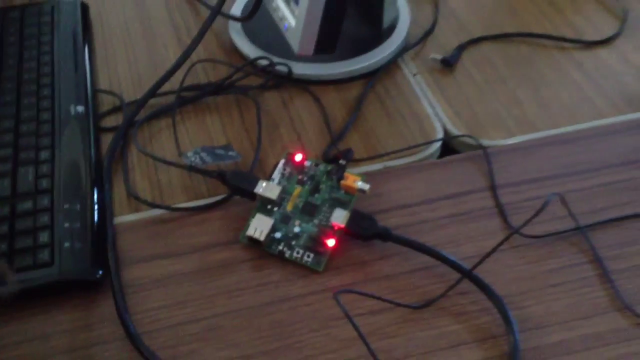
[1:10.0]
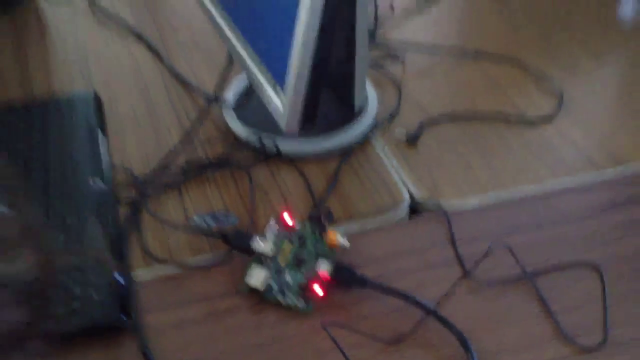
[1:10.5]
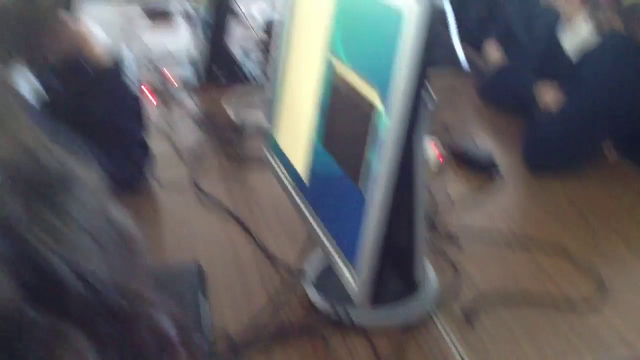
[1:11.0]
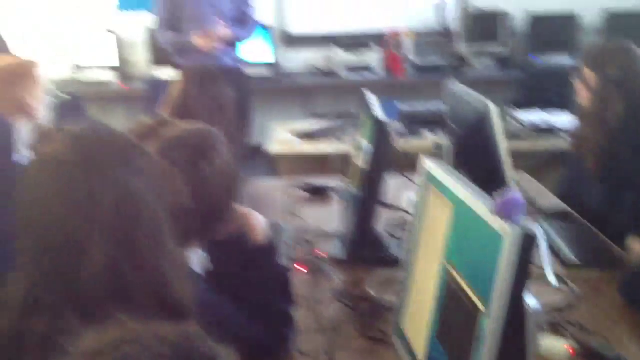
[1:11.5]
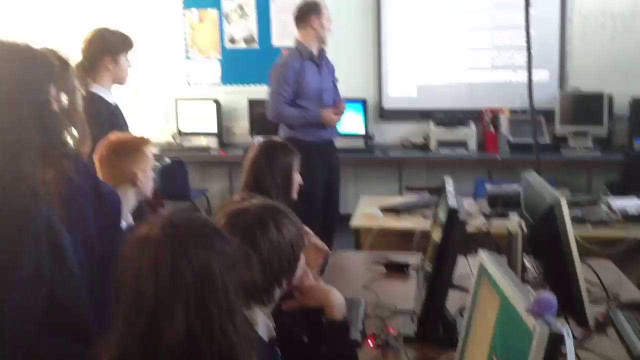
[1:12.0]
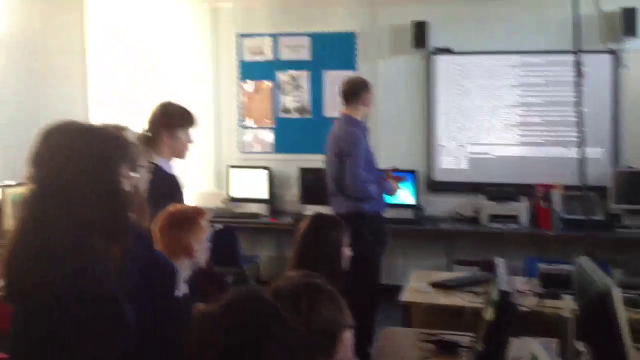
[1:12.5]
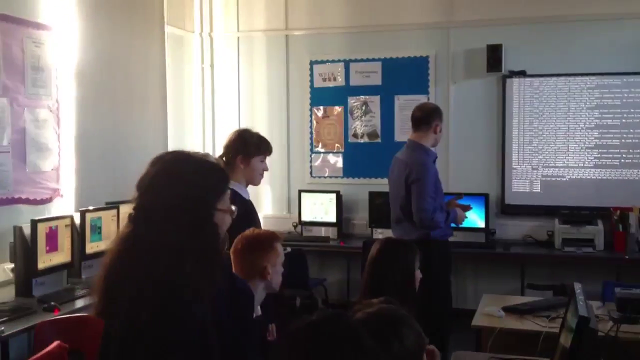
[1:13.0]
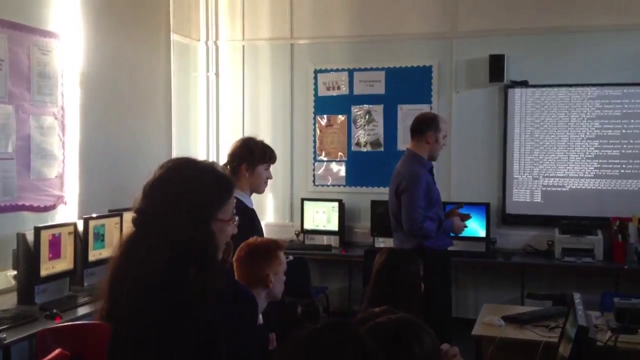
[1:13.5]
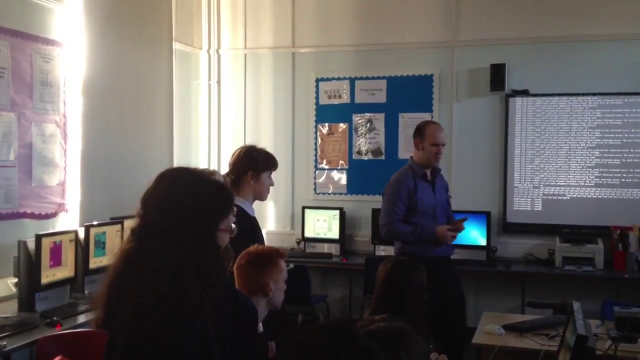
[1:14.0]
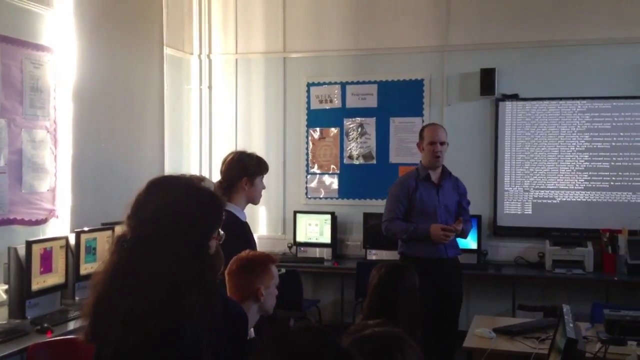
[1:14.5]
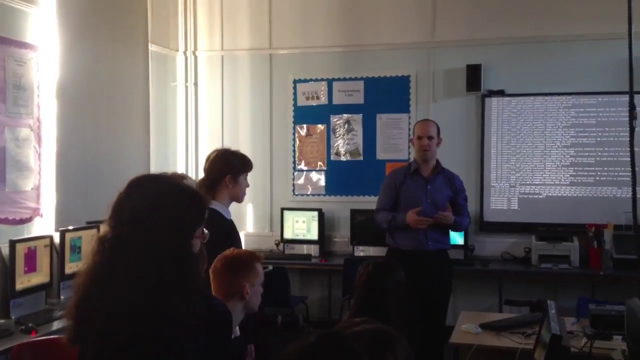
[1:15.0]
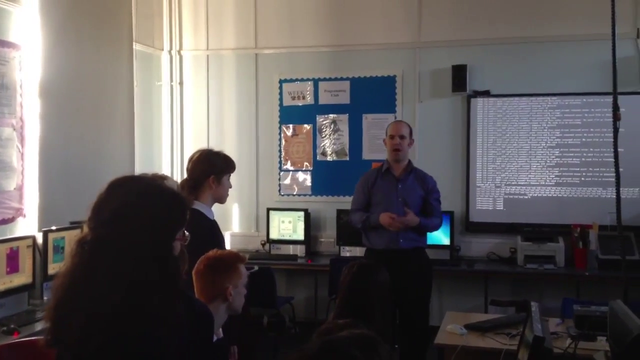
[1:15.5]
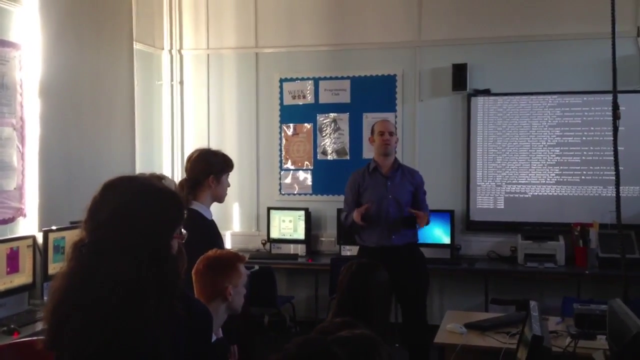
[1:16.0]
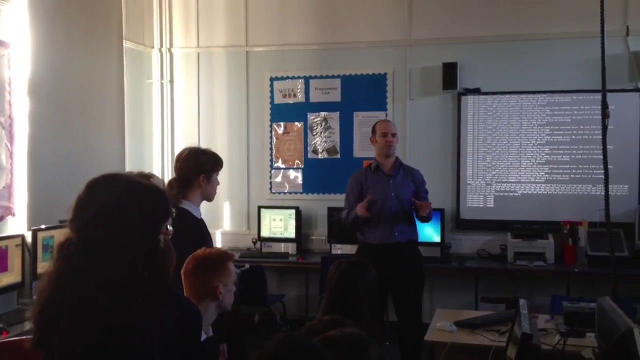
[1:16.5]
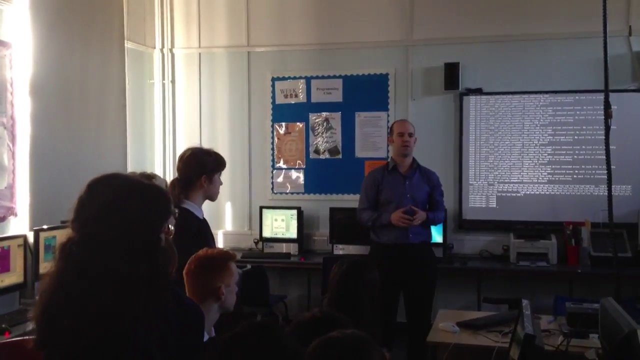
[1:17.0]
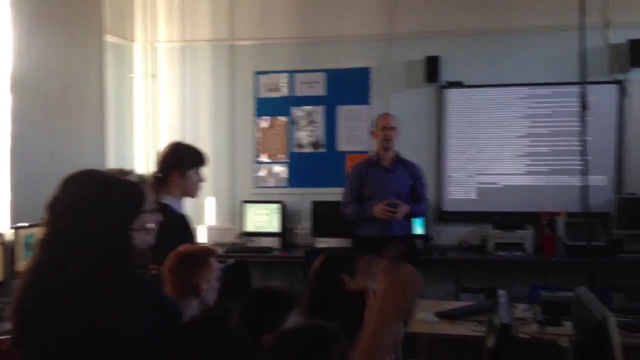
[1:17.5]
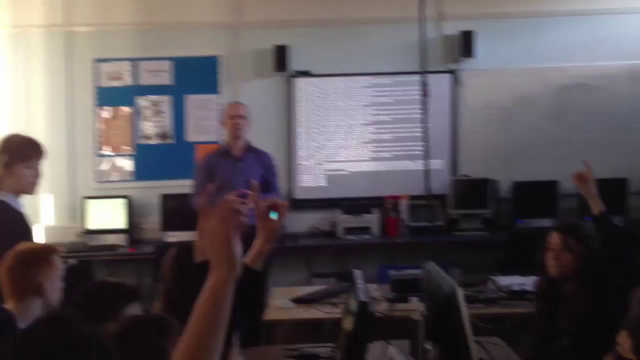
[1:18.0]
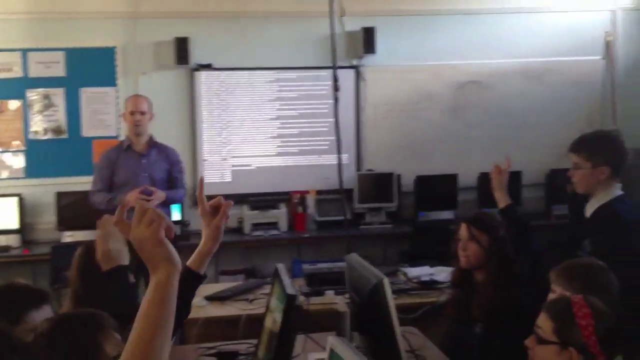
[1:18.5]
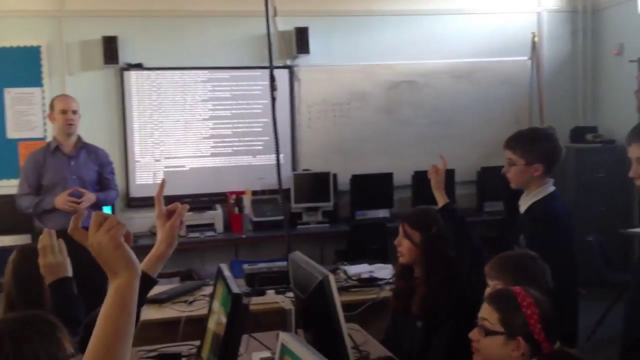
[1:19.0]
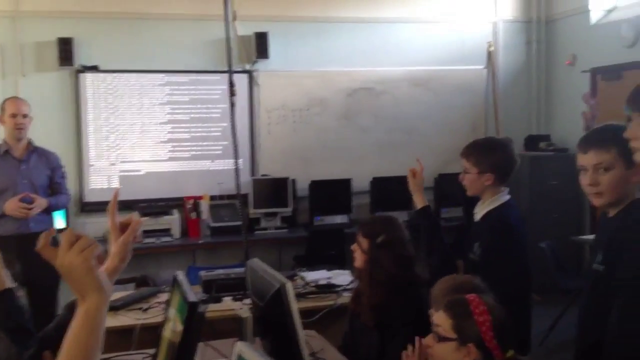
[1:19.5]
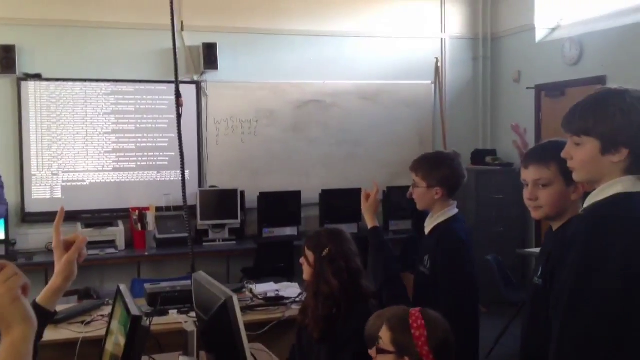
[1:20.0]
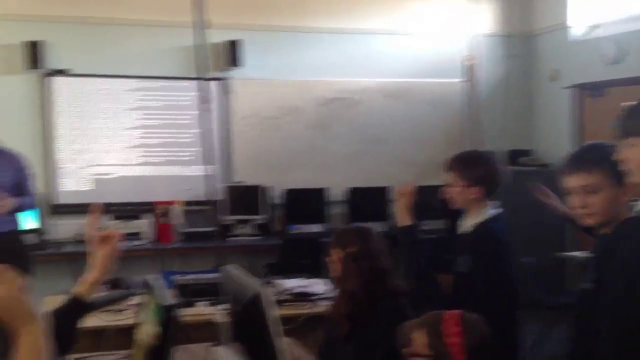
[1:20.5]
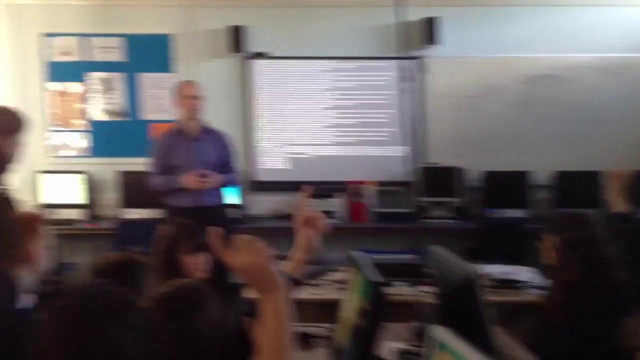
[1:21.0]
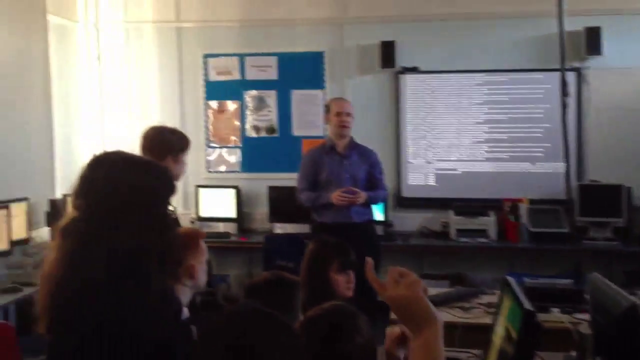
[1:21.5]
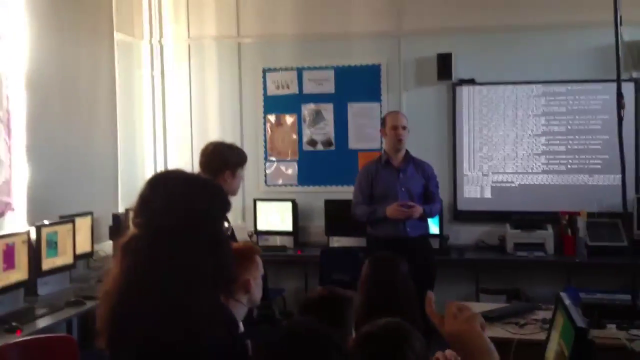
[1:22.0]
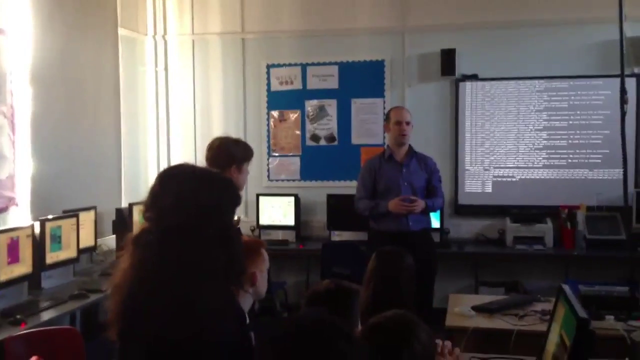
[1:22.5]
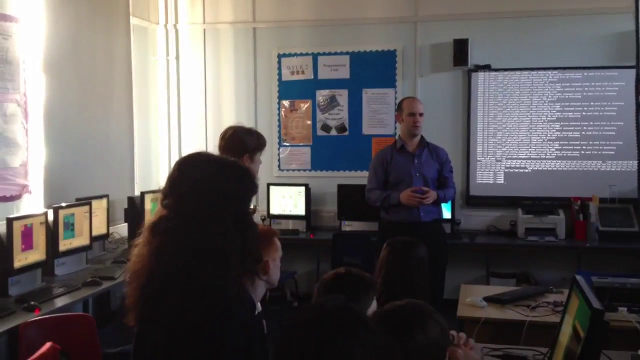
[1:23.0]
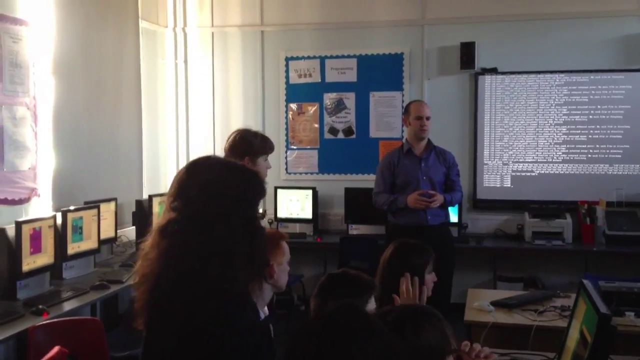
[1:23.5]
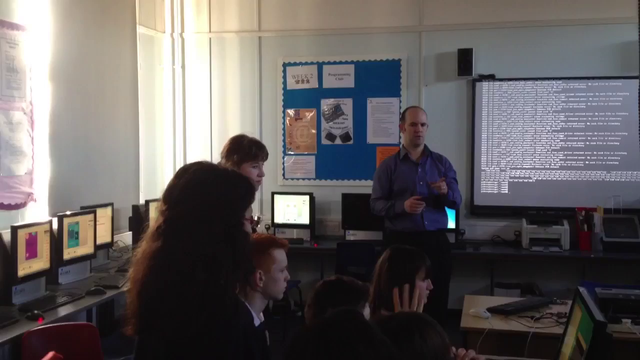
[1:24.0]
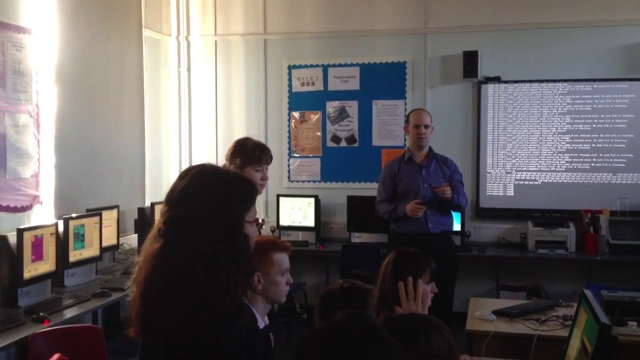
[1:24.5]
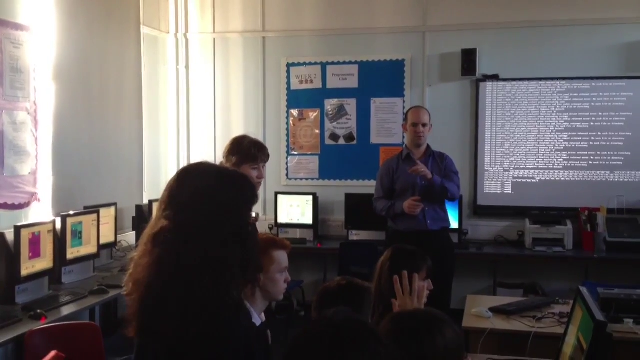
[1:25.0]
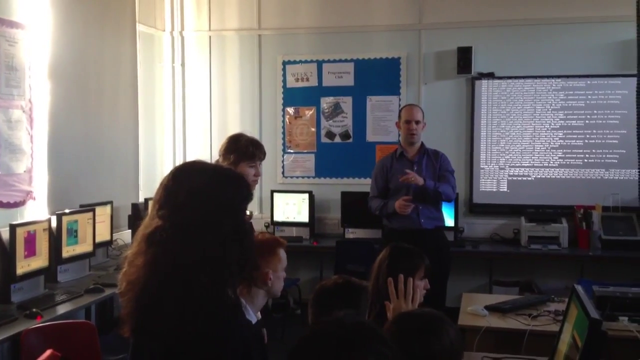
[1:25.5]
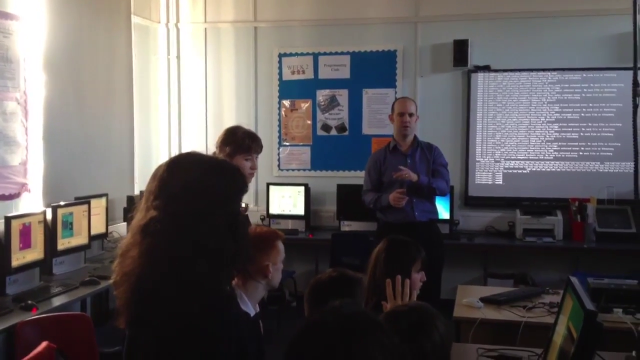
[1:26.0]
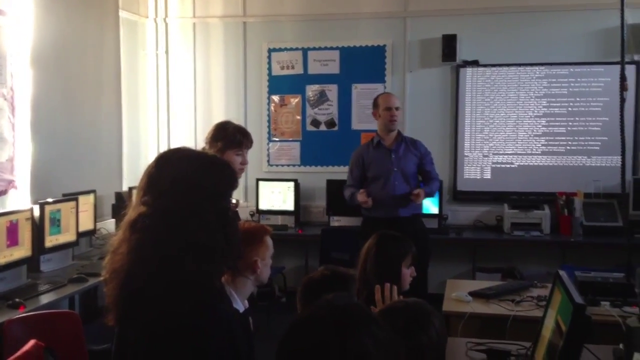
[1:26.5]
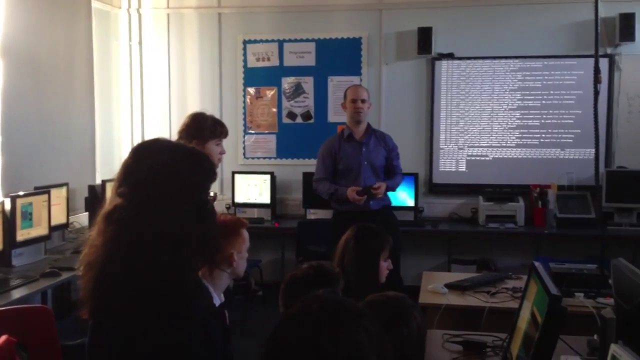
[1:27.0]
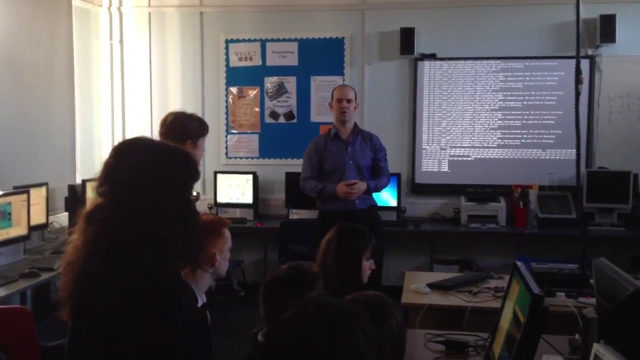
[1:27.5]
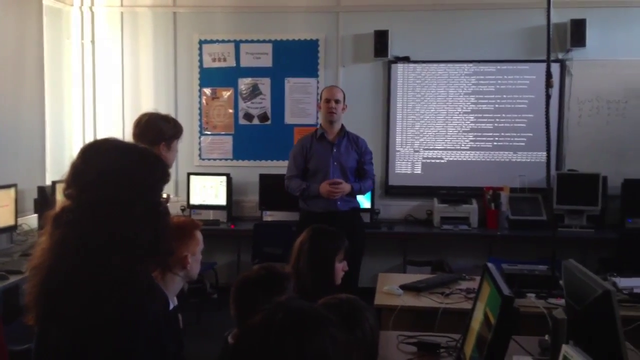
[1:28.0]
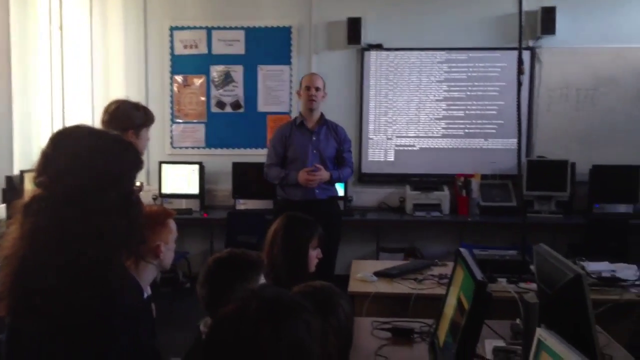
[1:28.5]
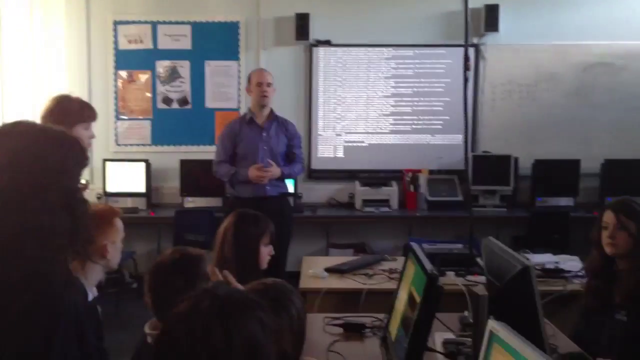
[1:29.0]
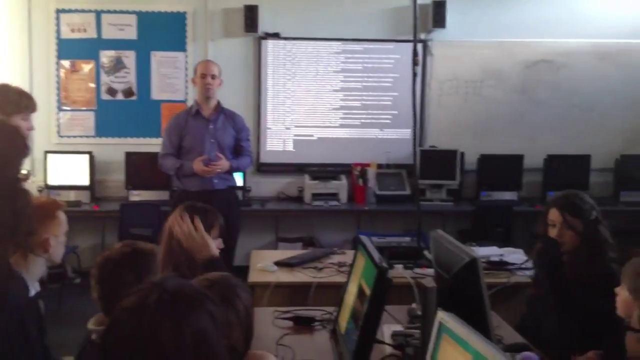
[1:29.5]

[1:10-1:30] The camera zooms out and back up to the teacher talking. On the left, two girls are standing up, observing, and more computer monitors are lined up against the wall. The teacher addresses the classroom with both hands bent at the elbows, palms open, then brings his fingertips together so they touch. Three students raise their hands, and the camera hovers to the right, where a few more students raise their hands, then hovers back to the teacher, whose fingertips are touching in front of him. He points his left hand at a student, then points to another student to the left, and brings his fingertips together again. A student in the lower left corner of the screen raises his right hand halfway. The room is dark and the students are seen only in side profile, so it is hard at times to tell which student is raising a hand.